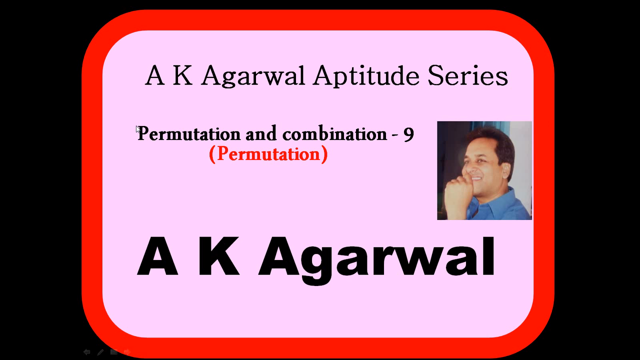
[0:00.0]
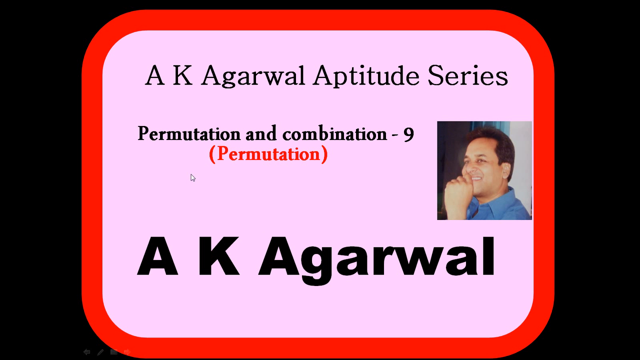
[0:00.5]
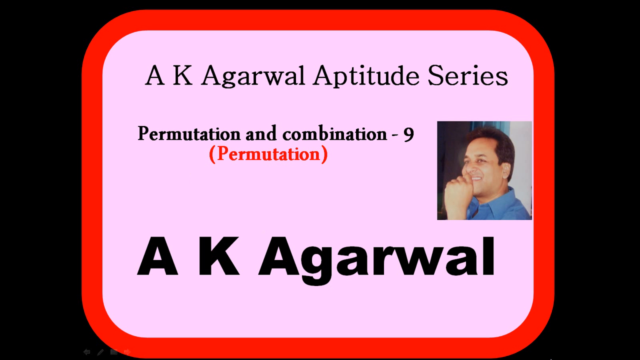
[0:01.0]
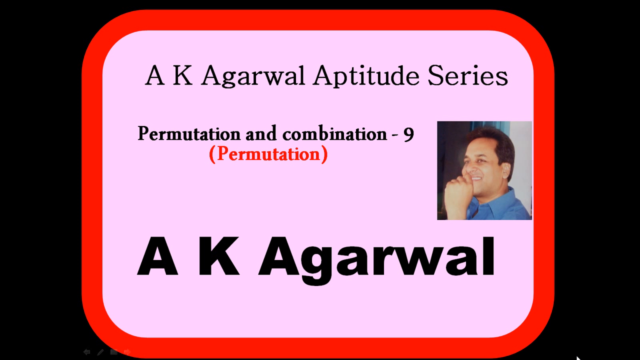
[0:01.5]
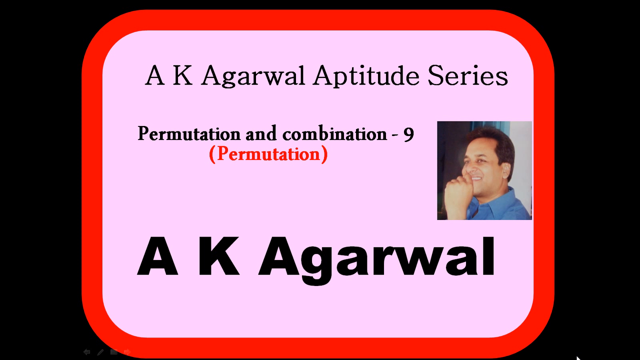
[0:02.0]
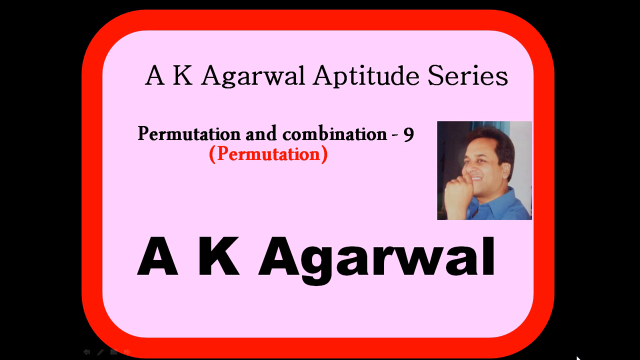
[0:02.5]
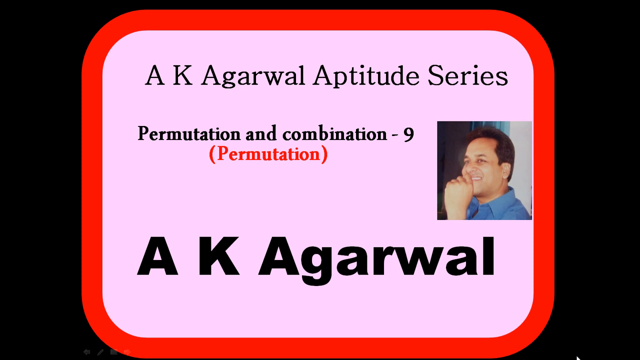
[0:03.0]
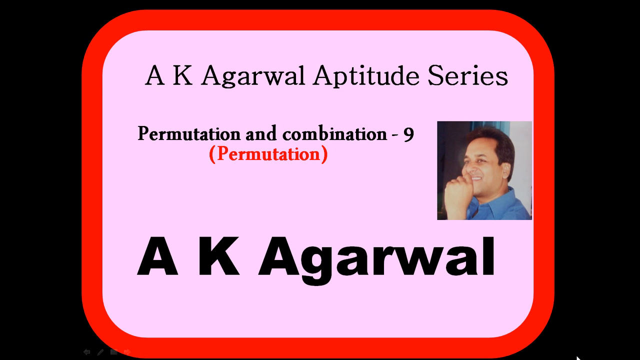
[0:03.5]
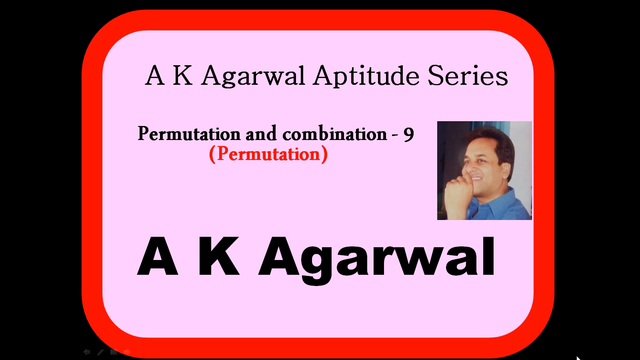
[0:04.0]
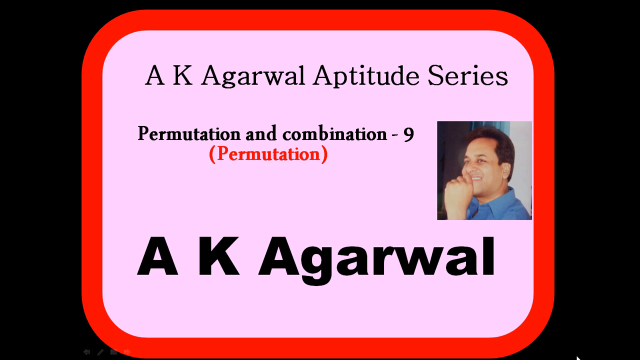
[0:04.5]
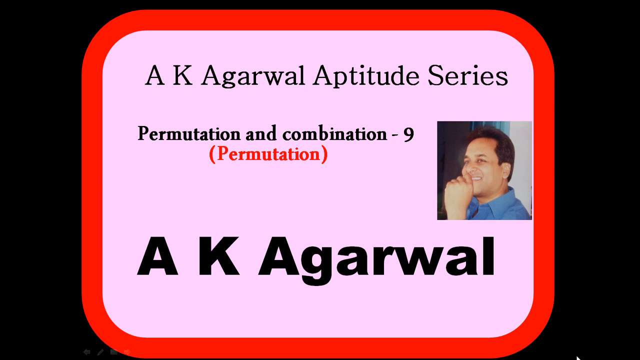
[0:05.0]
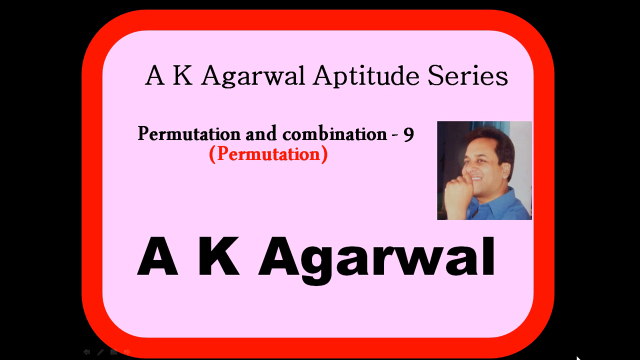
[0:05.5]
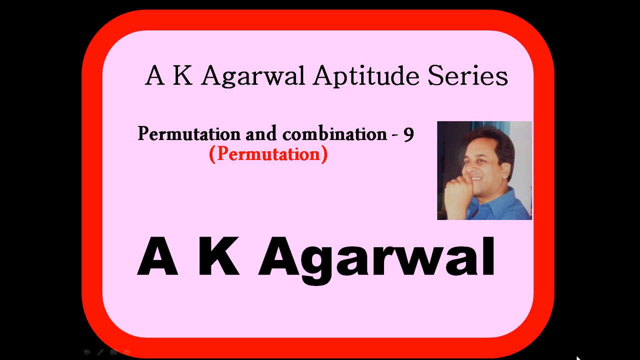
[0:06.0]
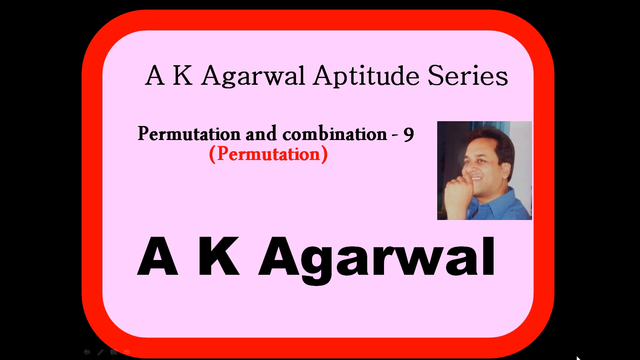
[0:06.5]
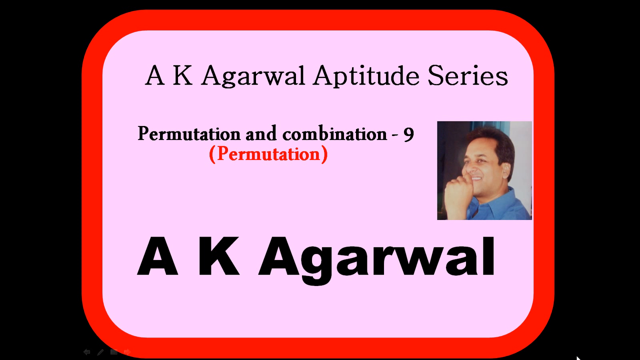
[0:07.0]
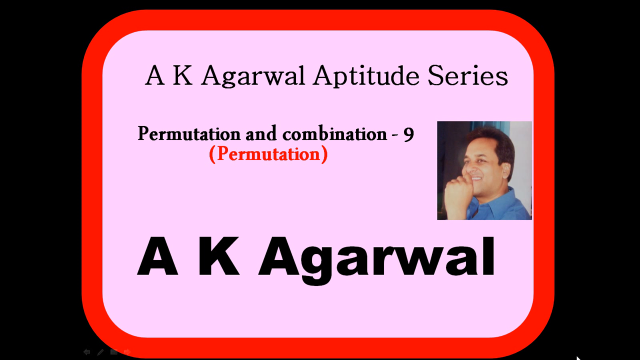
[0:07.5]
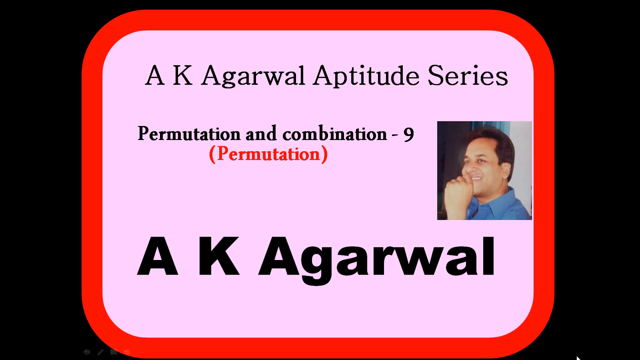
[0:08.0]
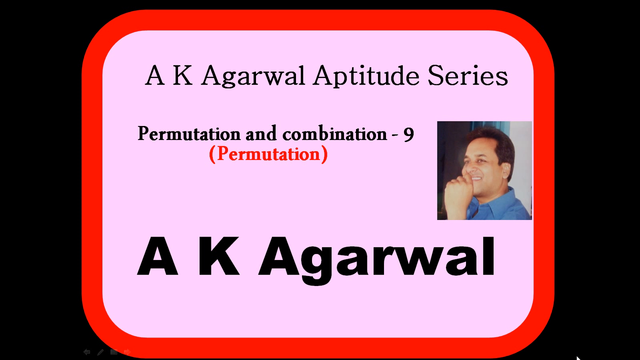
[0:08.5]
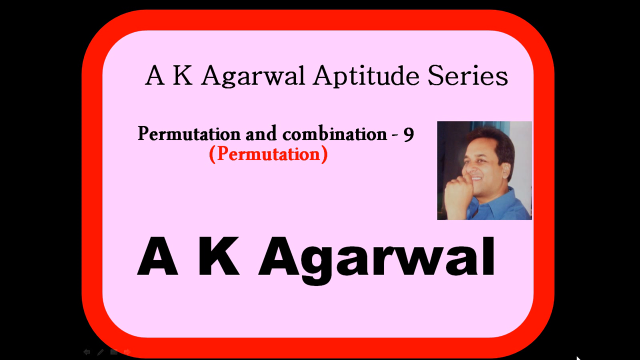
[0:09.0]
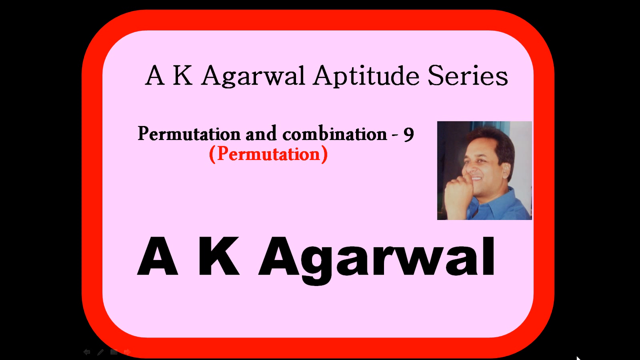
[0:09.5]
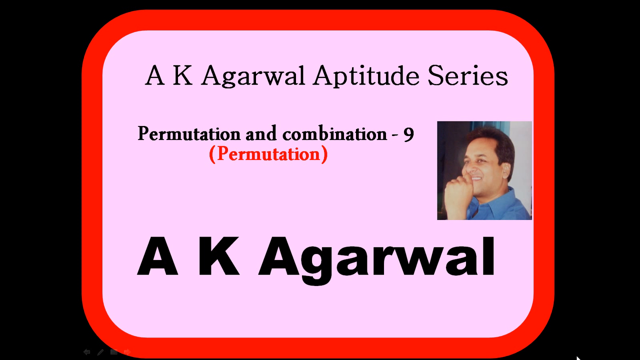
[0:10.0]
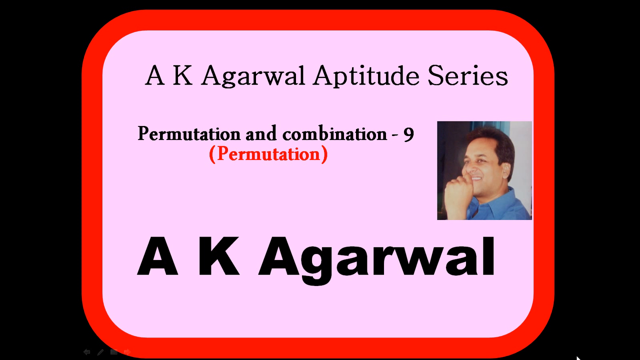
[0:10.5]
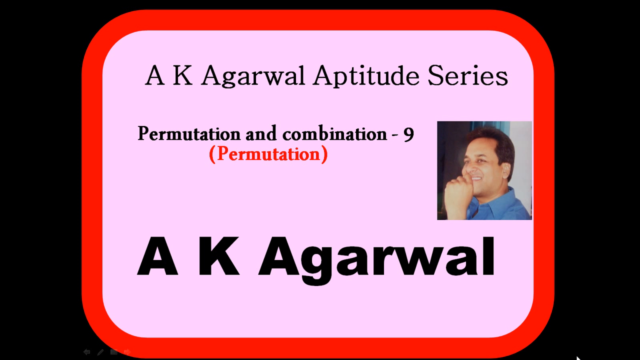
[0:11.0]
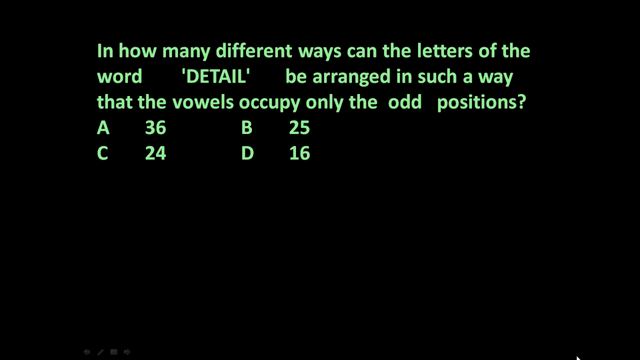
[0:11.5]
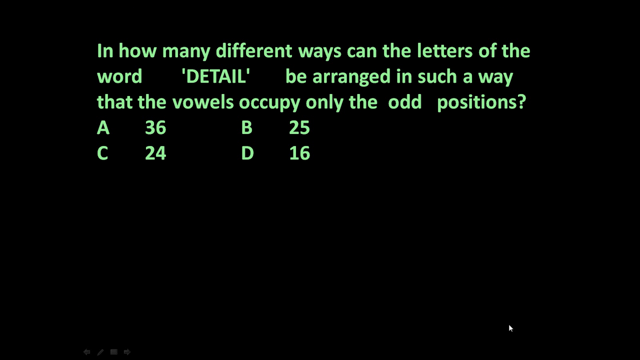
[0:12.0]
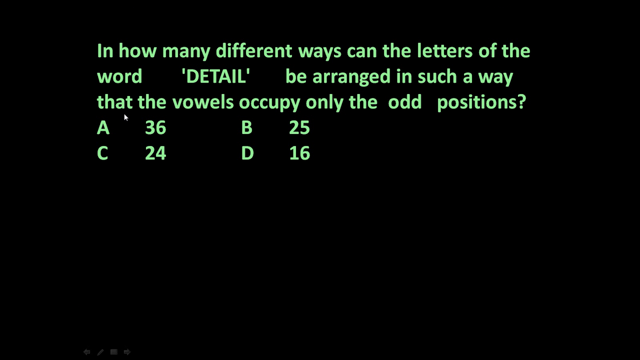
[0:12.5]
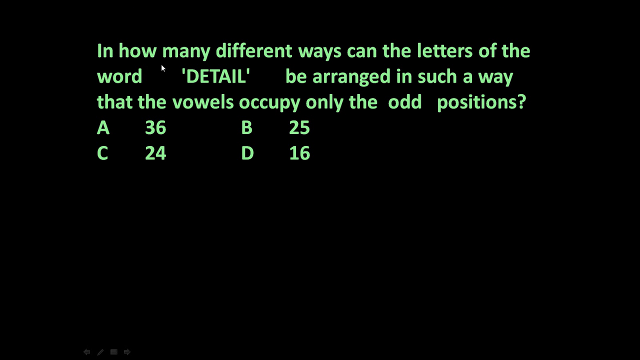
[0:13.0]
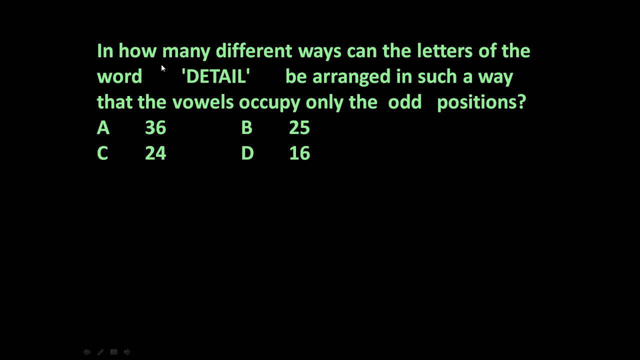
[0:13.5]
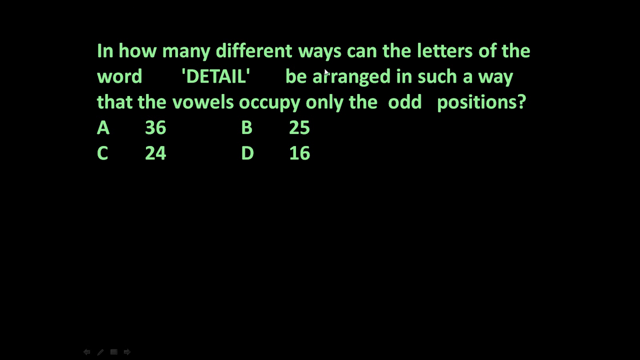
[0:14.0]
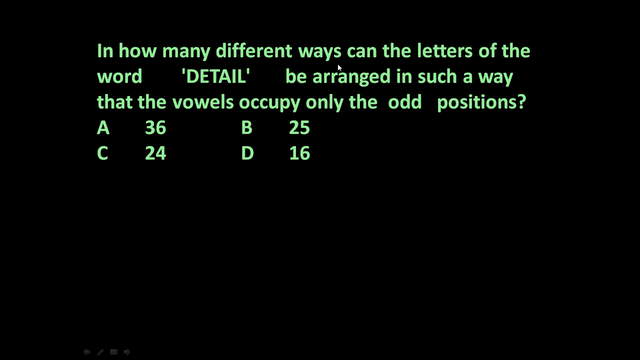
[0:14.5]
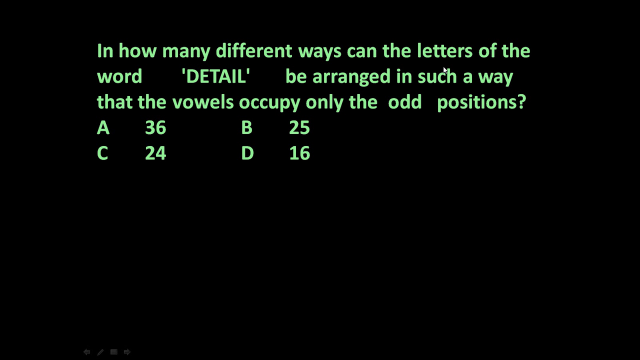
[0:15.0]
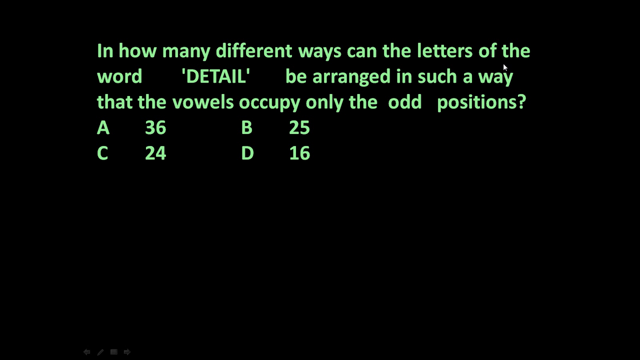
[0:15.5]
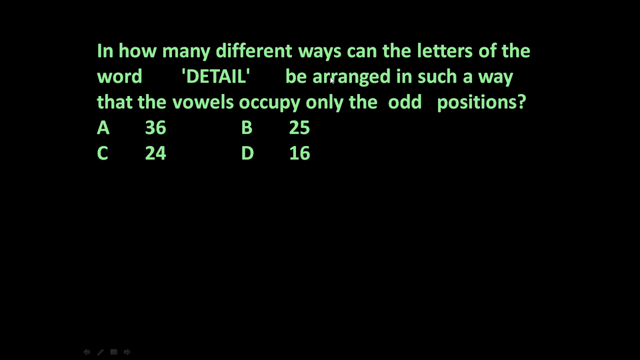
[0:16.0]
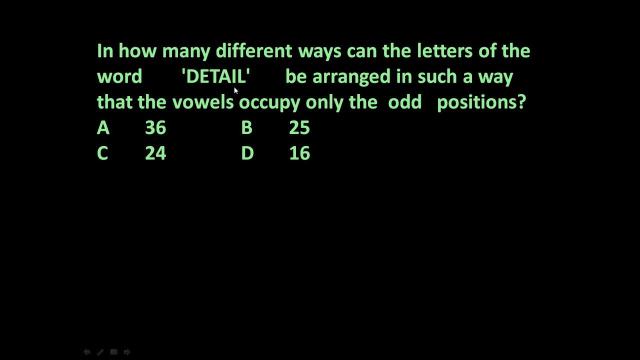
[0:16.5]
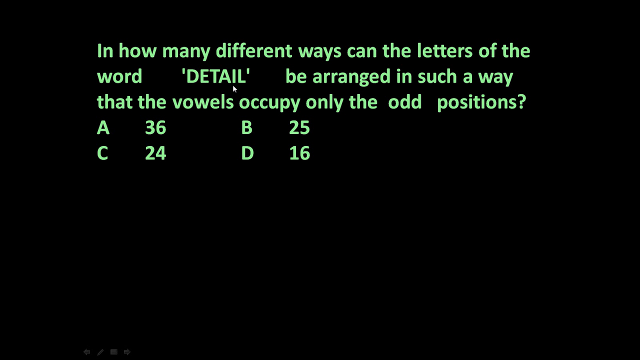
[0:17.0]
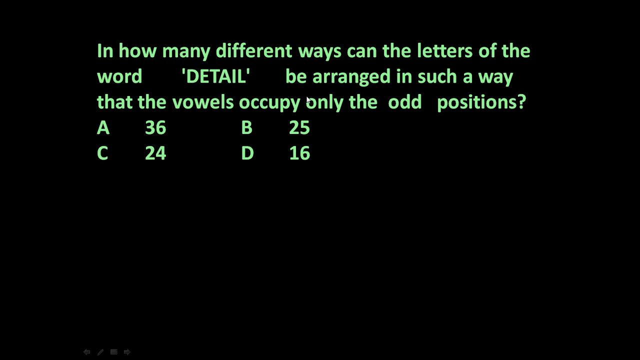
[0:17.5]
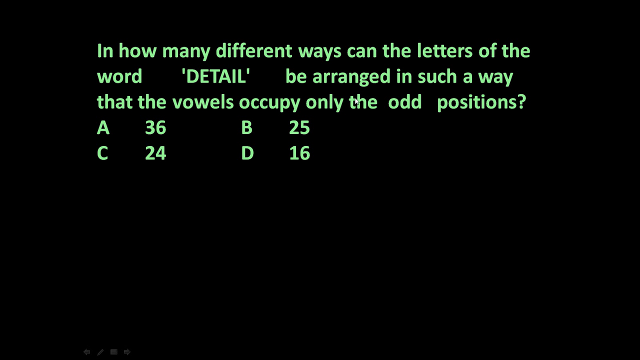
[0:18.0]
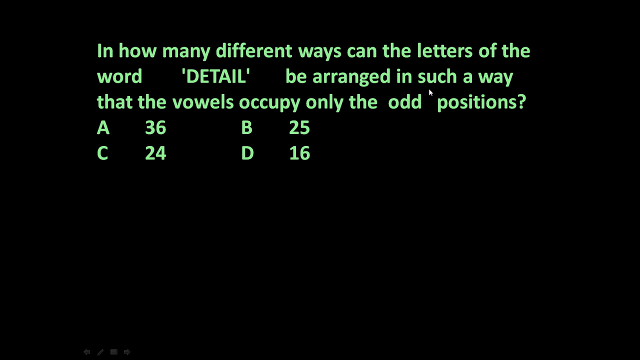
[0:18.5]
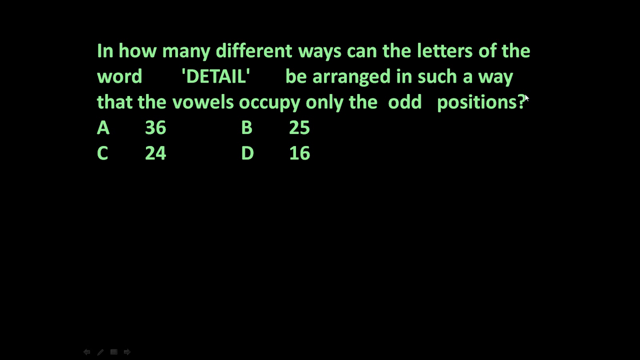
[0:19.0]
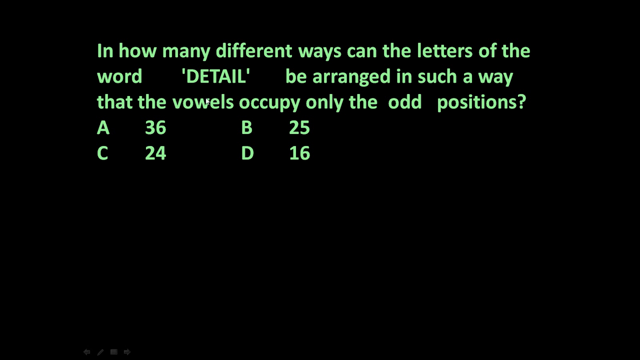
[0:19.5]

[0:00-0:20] The video opens on a black background with a rectangle with rounded corners. The rectangle has a thin red border, quite thin relative to the size of the inside area, and a pink interior. Across the pink background are the words "A K Agarwal Aptitude Series." Below that is "Permutation and Combination" with a dash and the number 9, and below that, in red and in parentheses, "Permutation." At the bottom, in large black block letters, is "A K Agarwal," with spaces between the initials but no punctuation. On the right-hand side of the pink area is a headshot of a man of South Asian descent with dark hair, wearing a blue shirt. His left hand is raised to his lips, and he smiles at the camera while looking slightly off to the right.